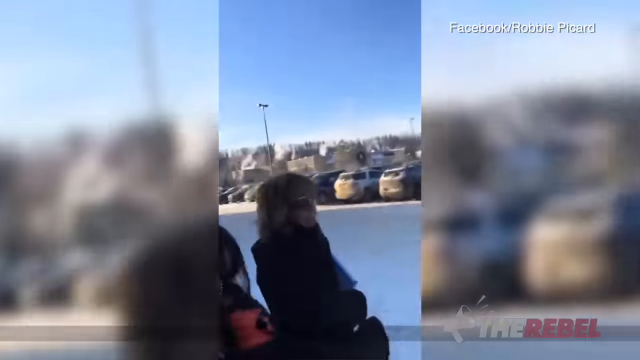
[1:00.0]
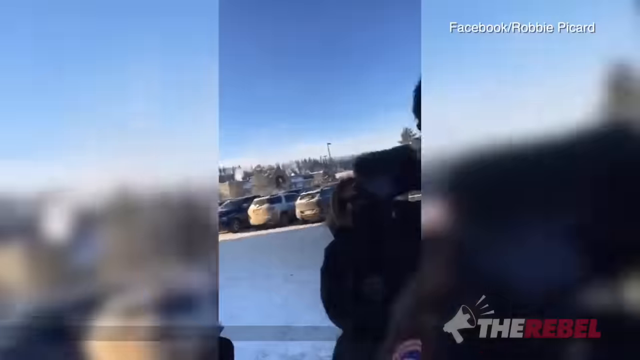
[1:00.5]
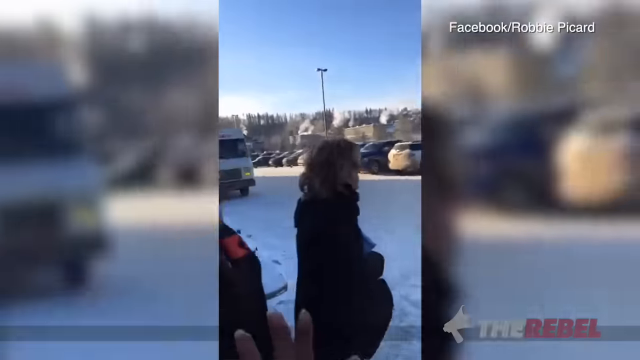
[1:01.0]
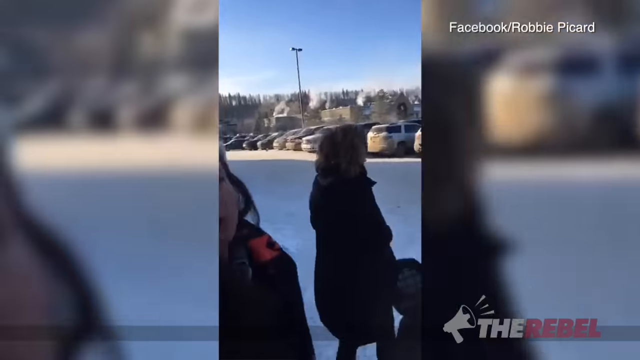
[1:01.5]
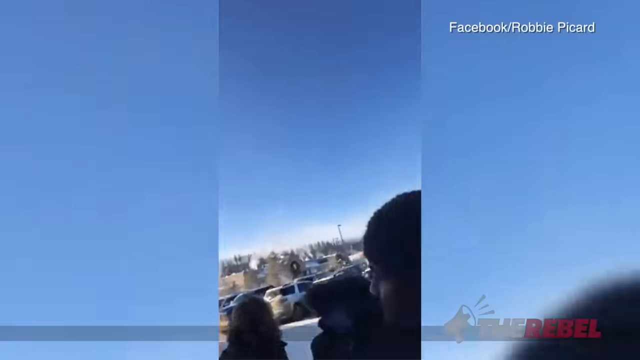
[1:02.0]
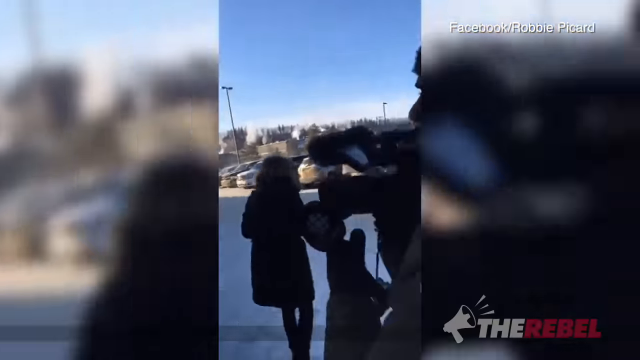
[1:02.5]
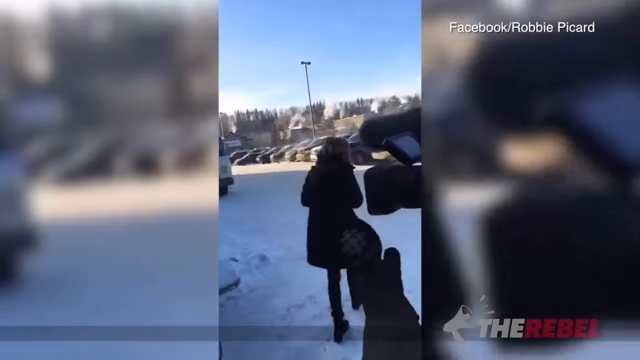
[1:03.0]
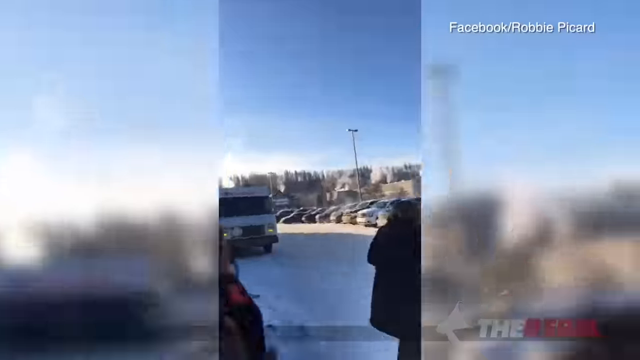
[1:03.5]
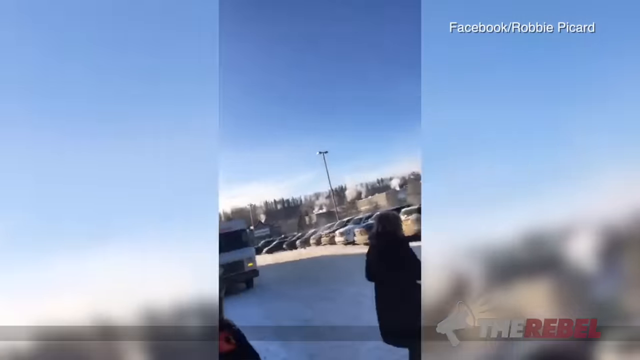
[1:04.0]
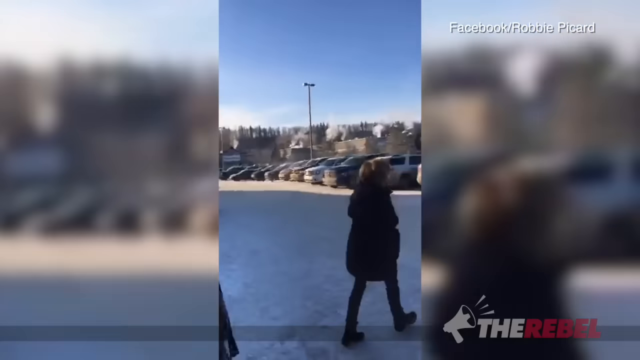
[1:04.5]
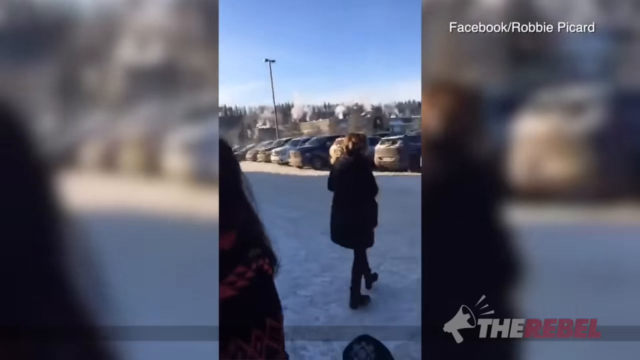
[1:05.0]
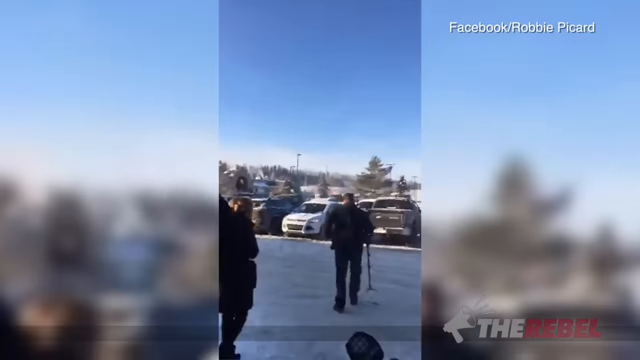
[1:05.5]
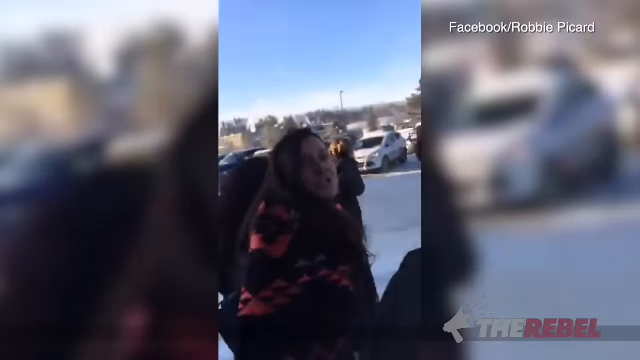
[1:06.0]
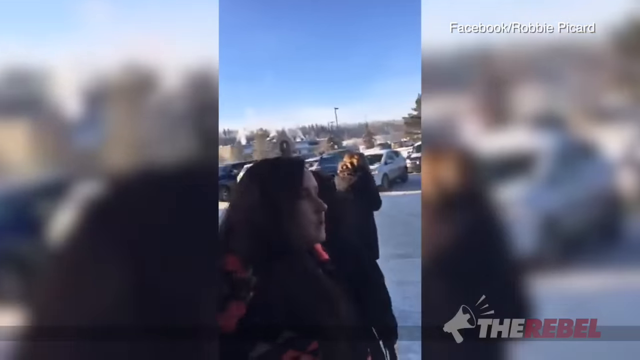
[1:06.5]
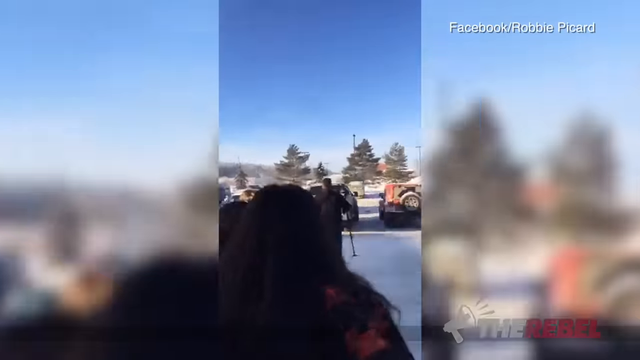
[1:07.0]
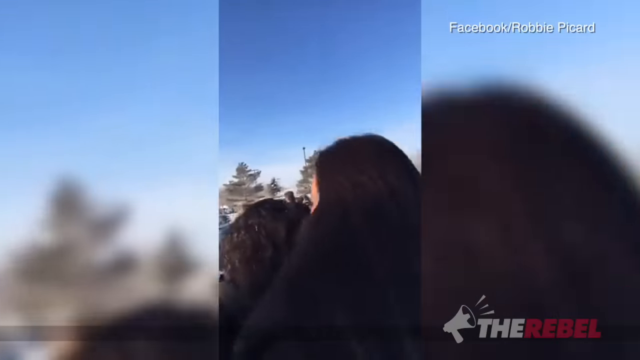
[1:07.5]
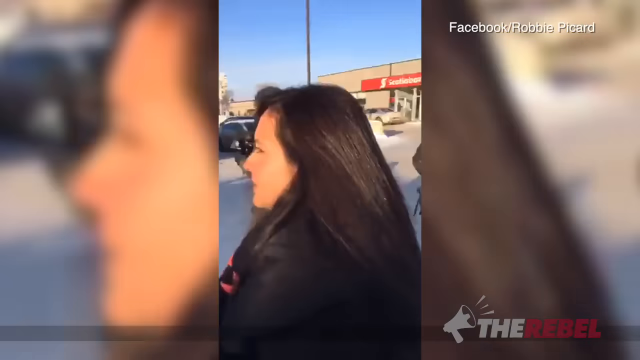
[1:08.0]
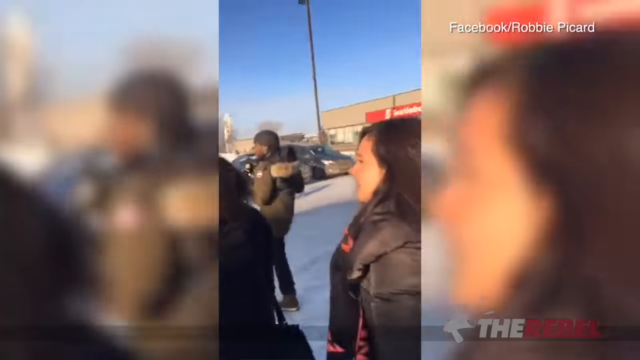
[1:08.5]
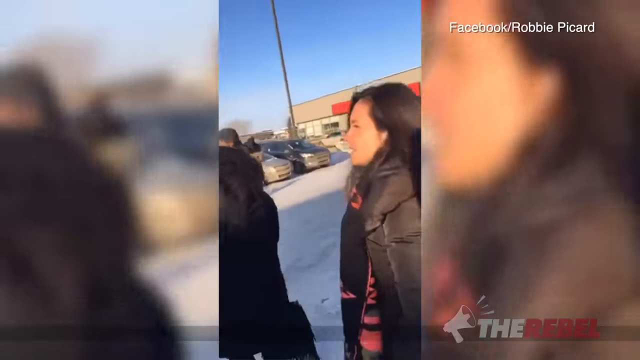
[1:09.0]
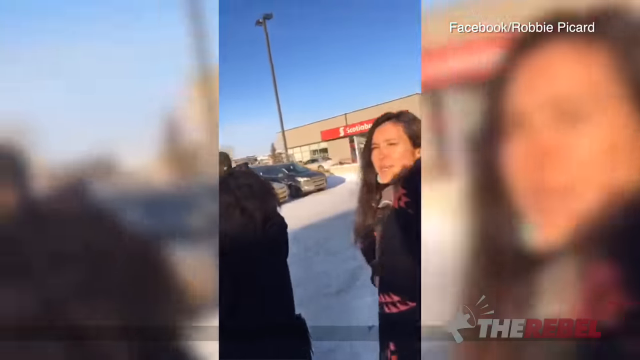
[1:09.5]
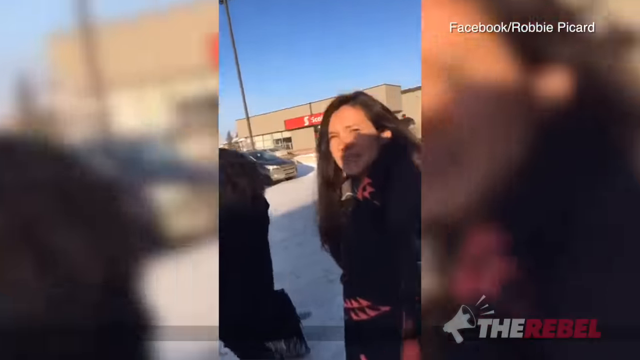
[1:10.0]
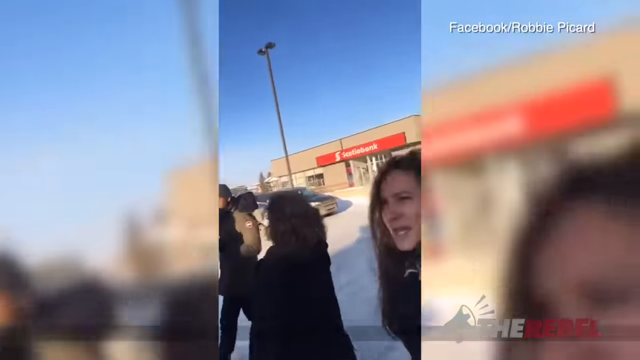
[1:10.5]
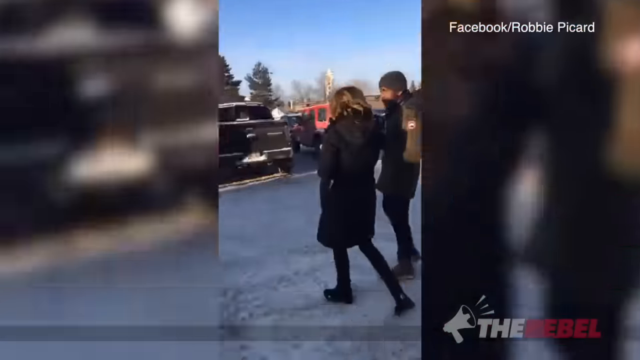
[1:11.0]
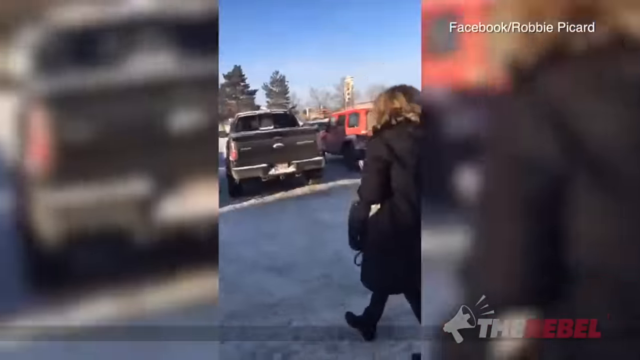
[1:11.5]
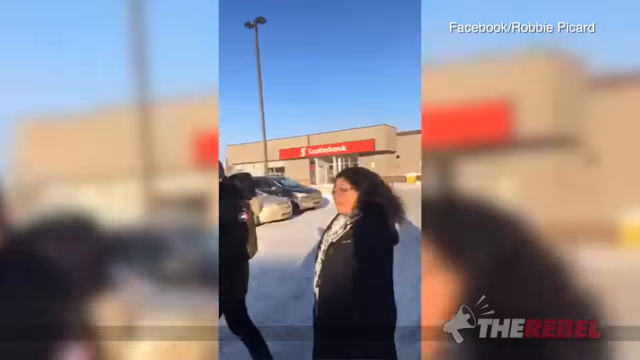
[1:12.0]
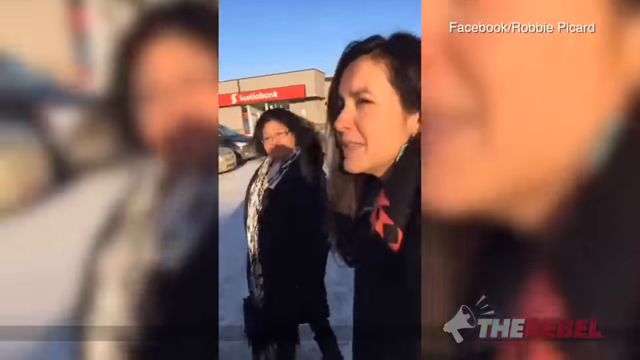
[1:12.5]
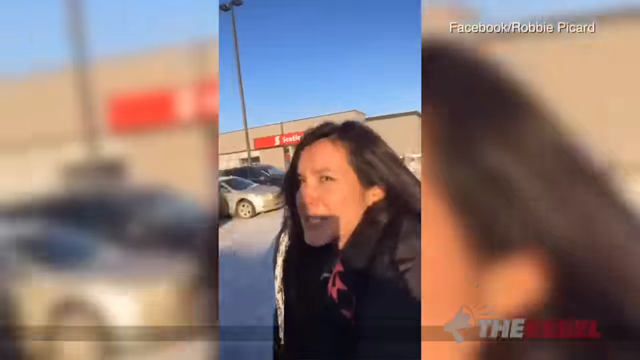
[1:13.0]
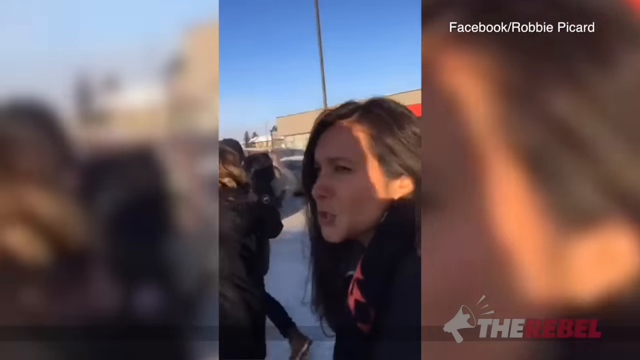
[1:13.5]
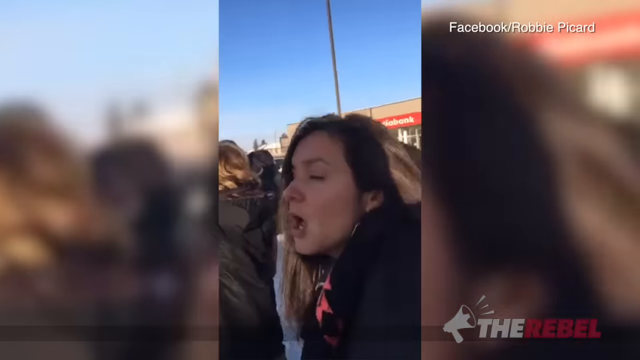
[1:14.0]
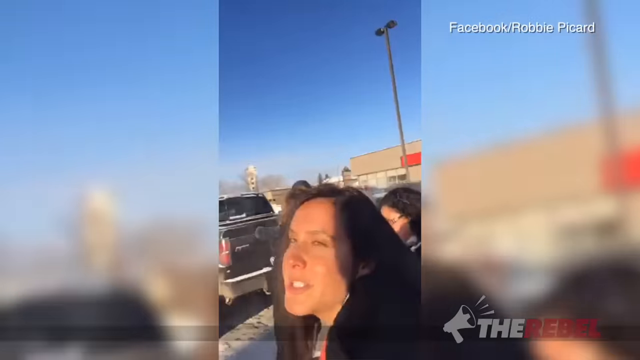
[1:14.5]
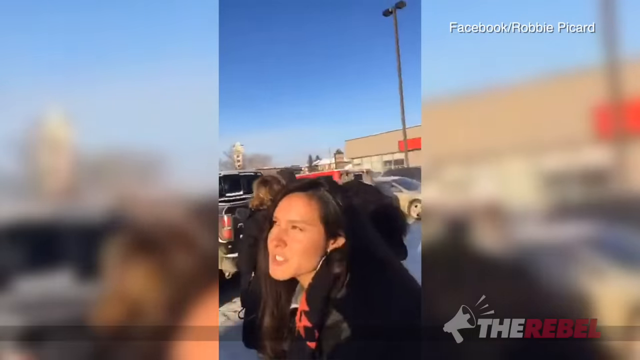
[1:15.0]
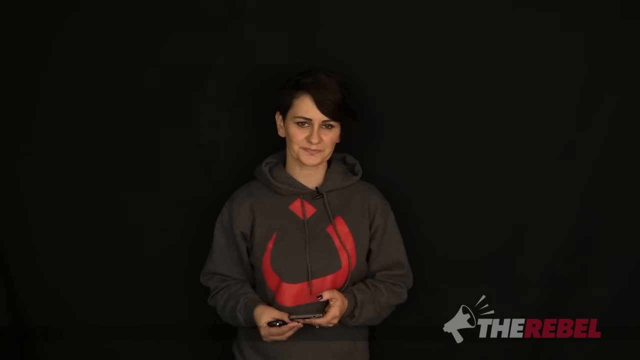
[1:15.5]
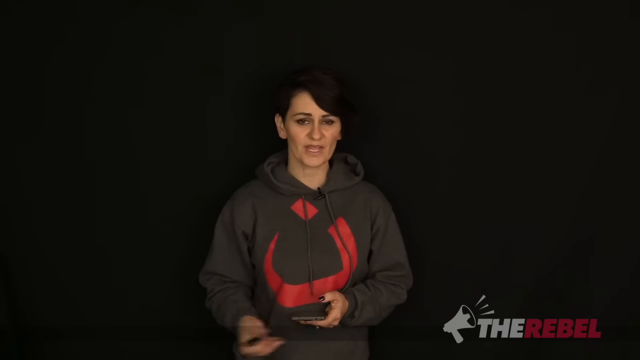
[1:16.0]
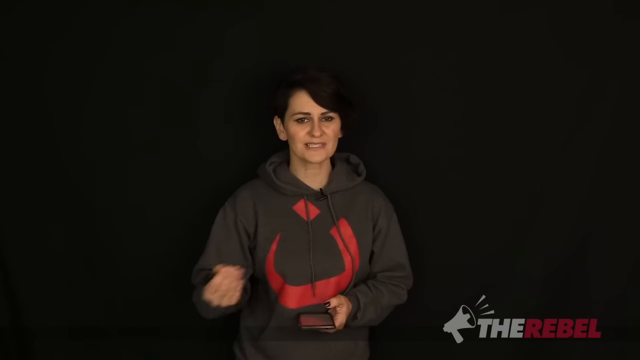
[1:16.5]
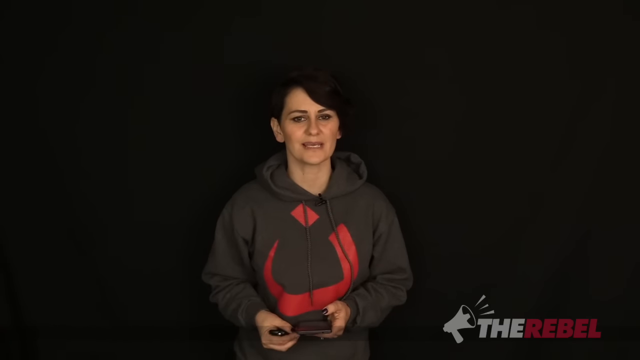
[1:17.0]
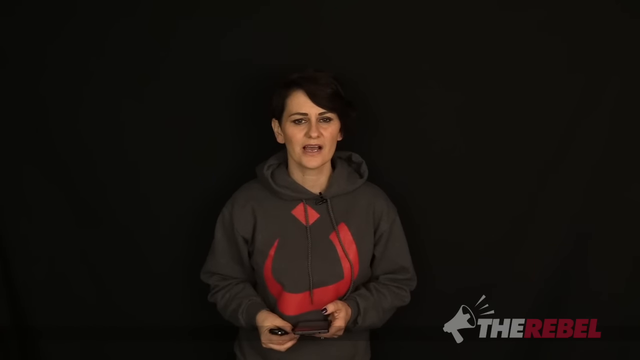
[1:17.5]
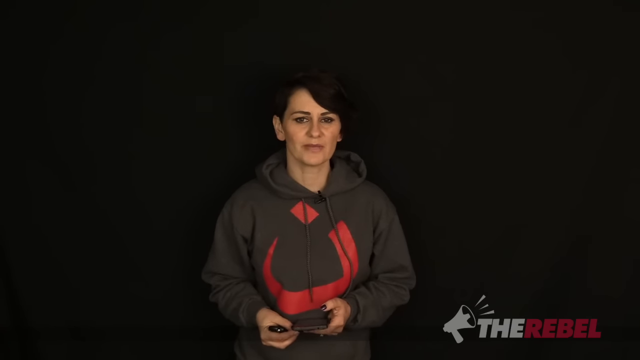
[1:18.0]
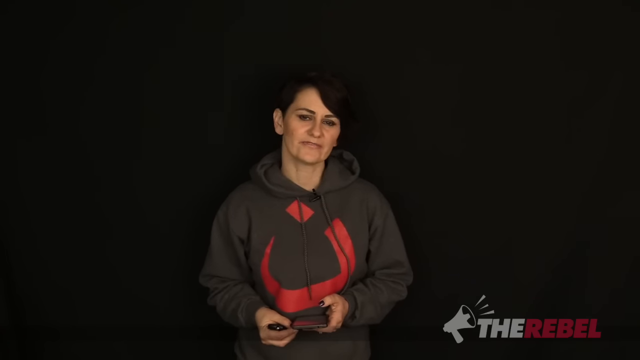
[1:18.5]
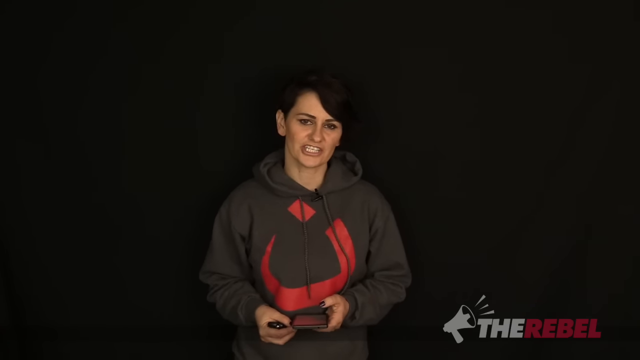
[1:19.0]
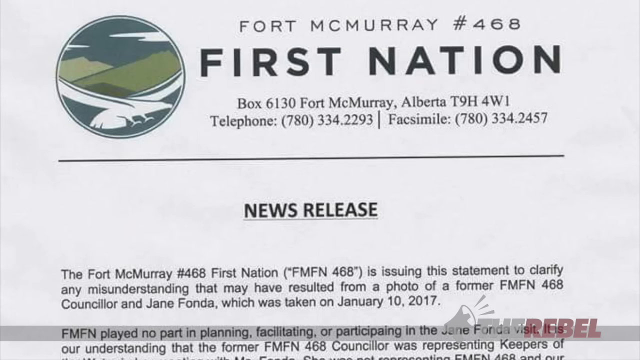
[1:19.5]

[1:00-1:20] The vertical phone video continues, showing the women apparently being harassed by some kind of cameraman. One of the women pushes away the phone that is recording, the other starts walking away, and the woman turns to the camera and screams something. They seem angry as they walk toward one of the cars. The footage freezes a little, seemingly showing the facial expressions of the woman, who appears annoyed by the situation. The news anchor is then shown talking about the subject, seeming serious about it.